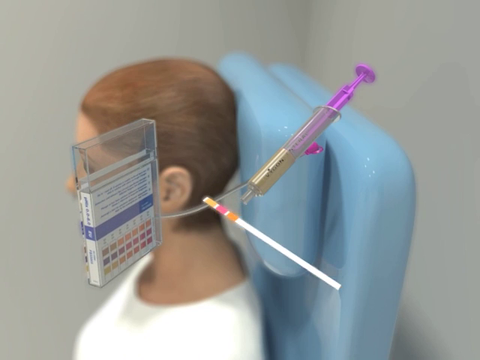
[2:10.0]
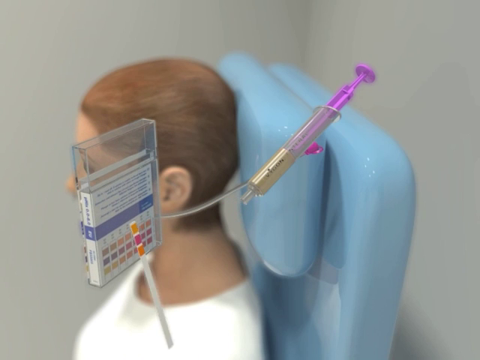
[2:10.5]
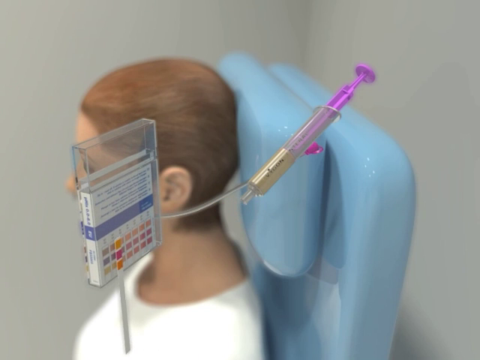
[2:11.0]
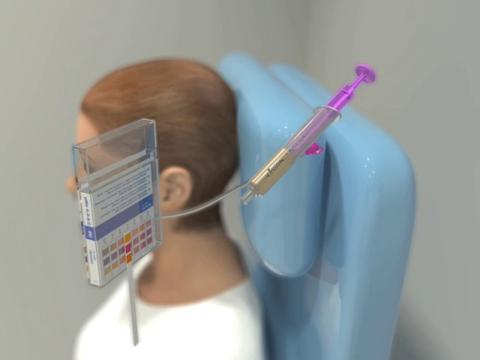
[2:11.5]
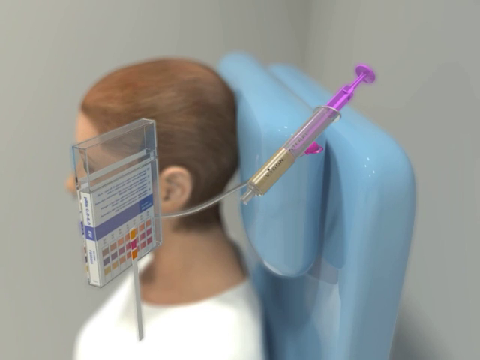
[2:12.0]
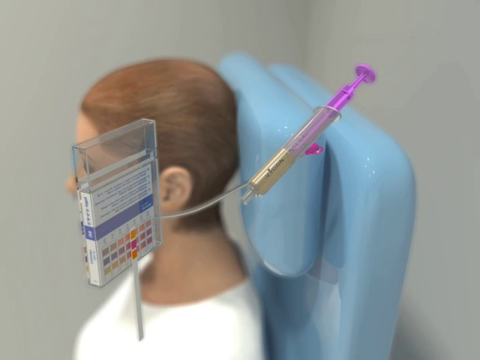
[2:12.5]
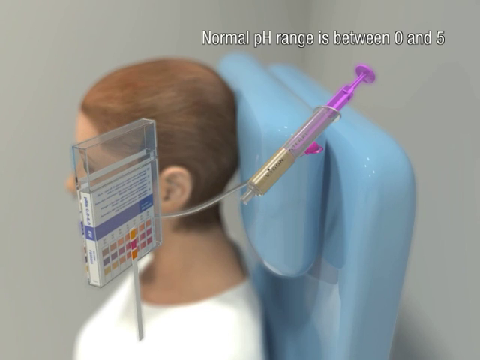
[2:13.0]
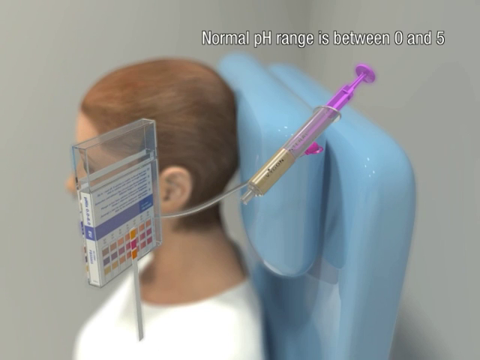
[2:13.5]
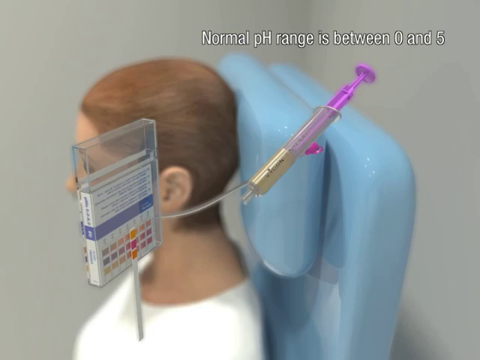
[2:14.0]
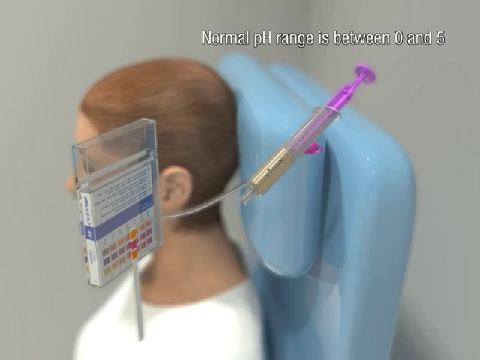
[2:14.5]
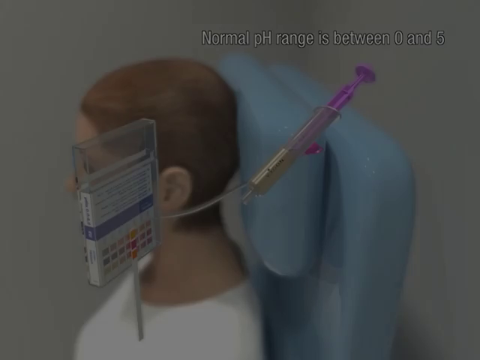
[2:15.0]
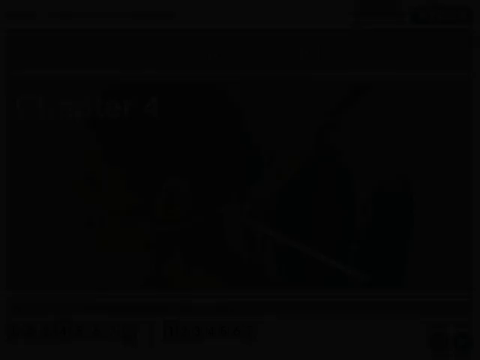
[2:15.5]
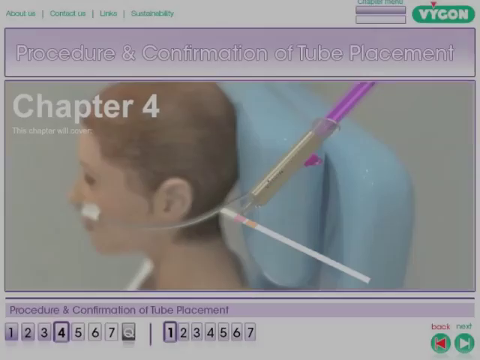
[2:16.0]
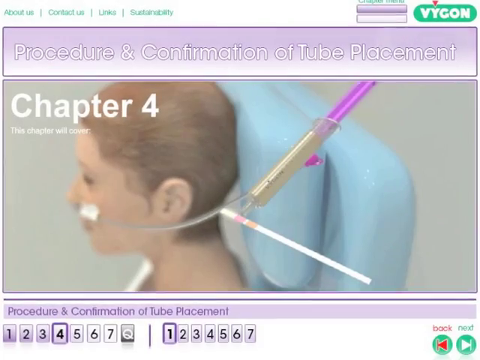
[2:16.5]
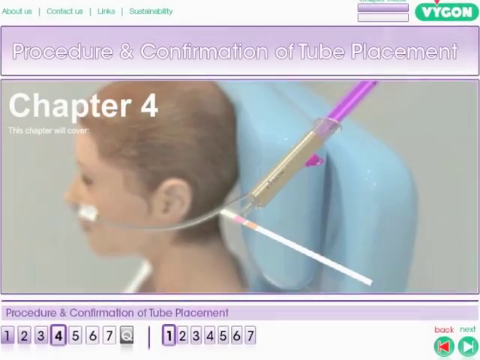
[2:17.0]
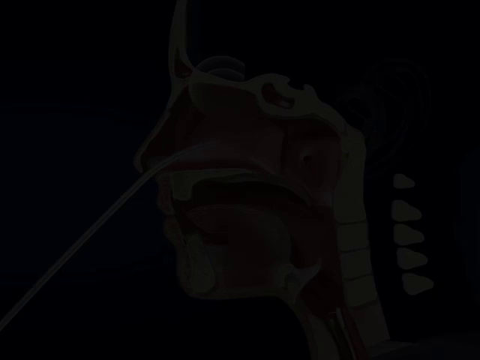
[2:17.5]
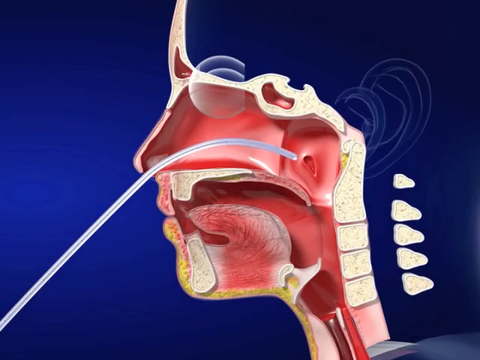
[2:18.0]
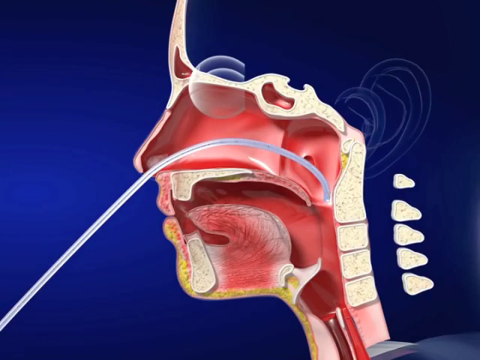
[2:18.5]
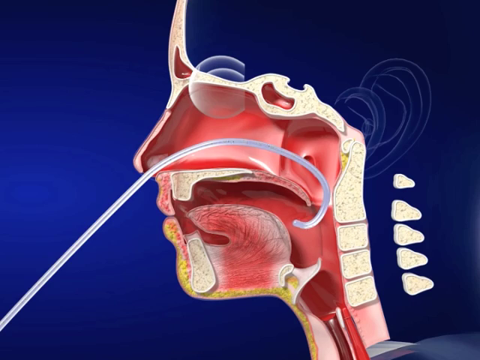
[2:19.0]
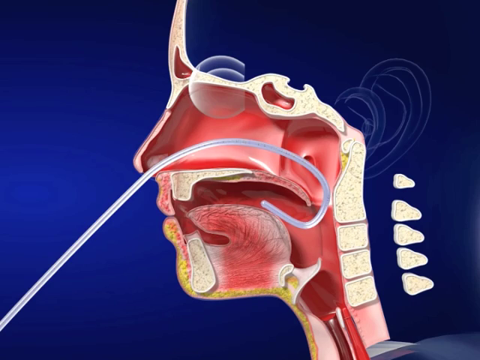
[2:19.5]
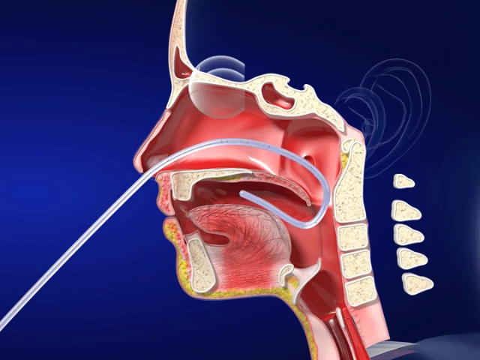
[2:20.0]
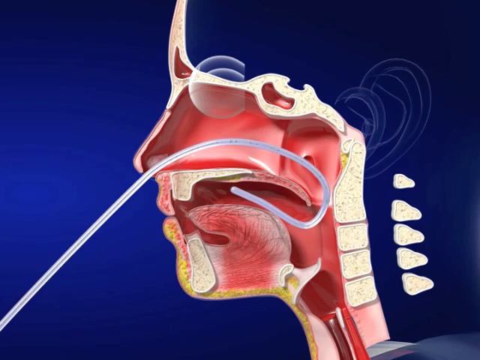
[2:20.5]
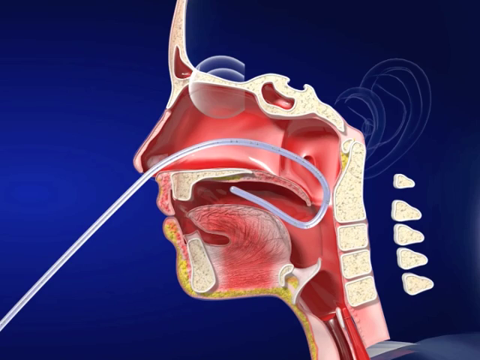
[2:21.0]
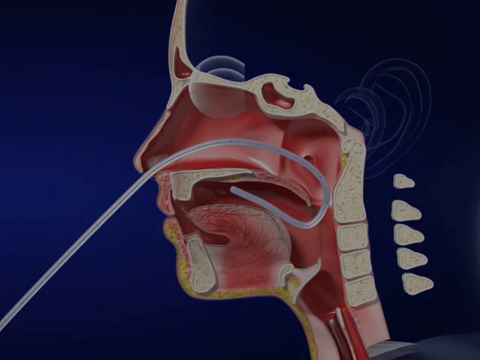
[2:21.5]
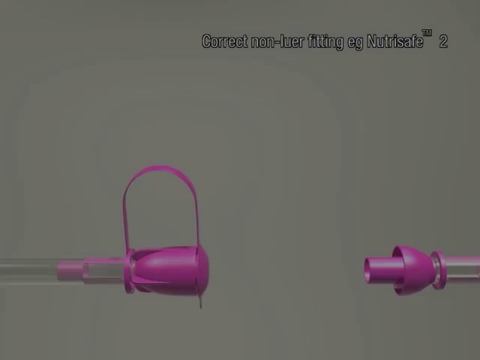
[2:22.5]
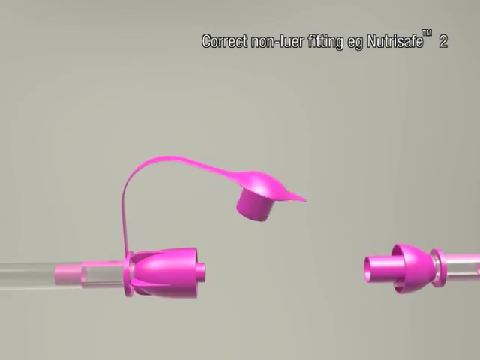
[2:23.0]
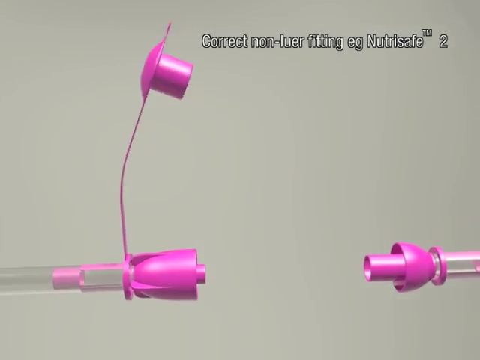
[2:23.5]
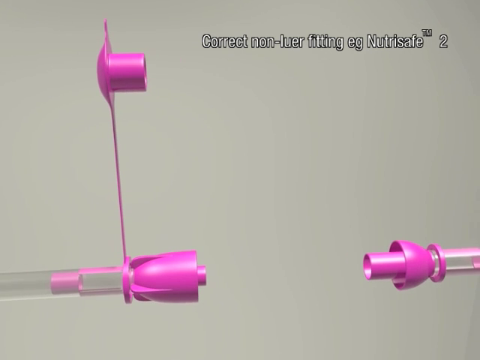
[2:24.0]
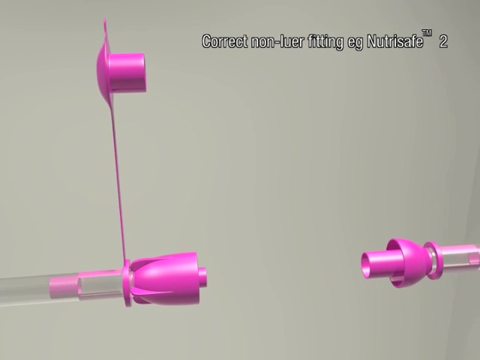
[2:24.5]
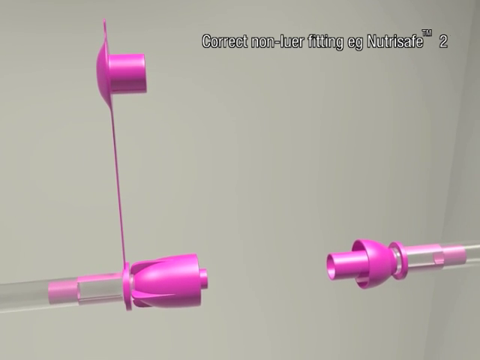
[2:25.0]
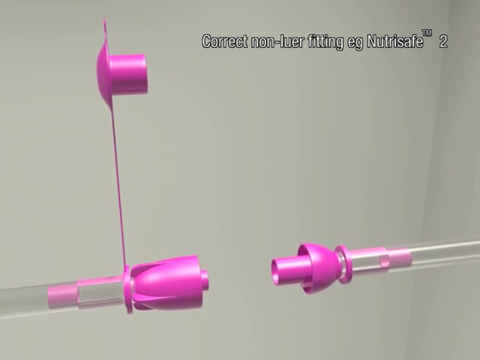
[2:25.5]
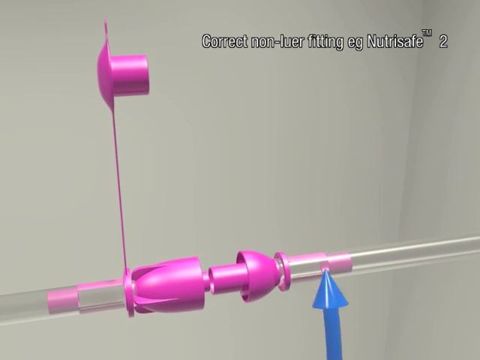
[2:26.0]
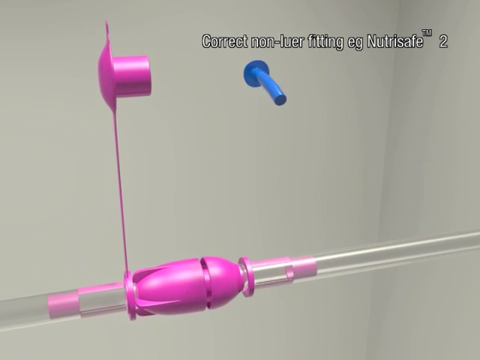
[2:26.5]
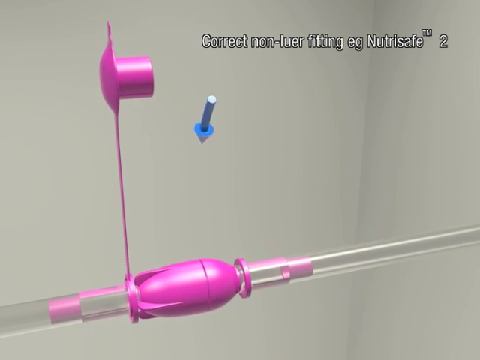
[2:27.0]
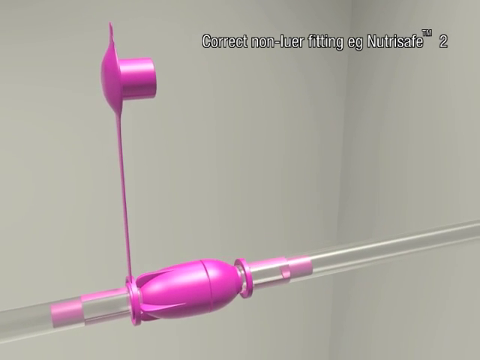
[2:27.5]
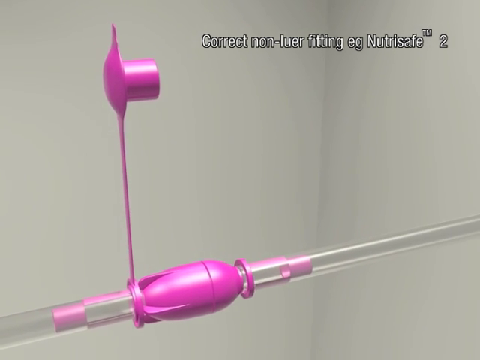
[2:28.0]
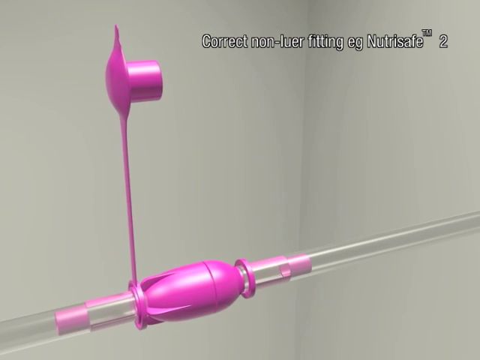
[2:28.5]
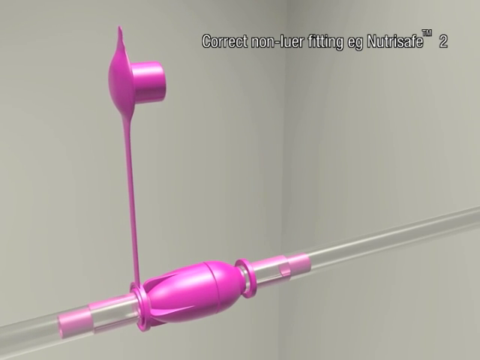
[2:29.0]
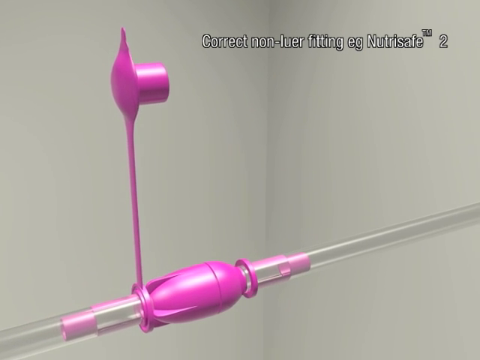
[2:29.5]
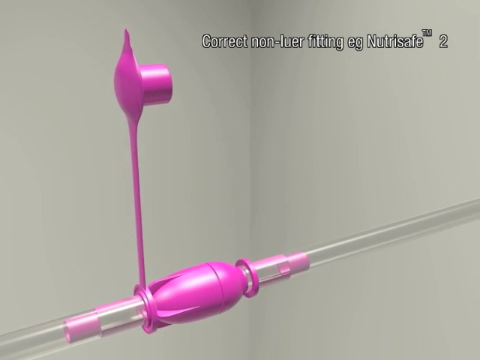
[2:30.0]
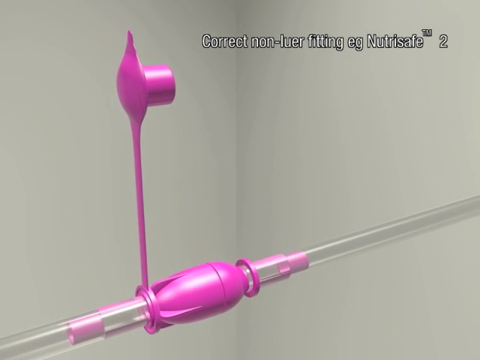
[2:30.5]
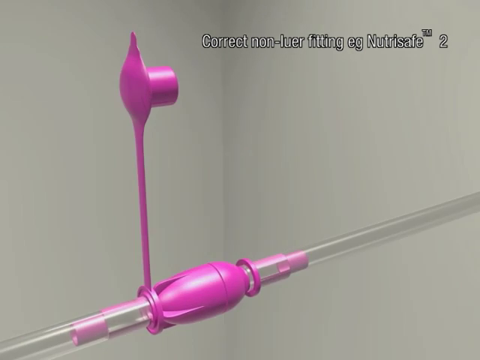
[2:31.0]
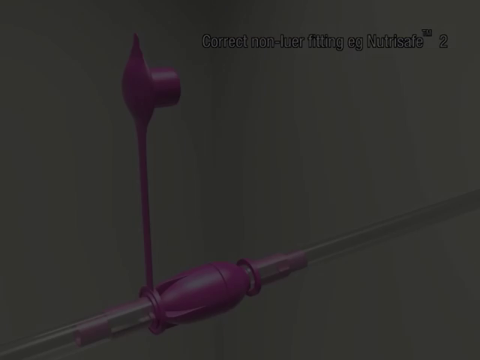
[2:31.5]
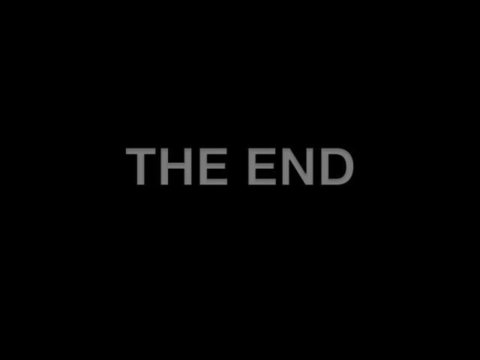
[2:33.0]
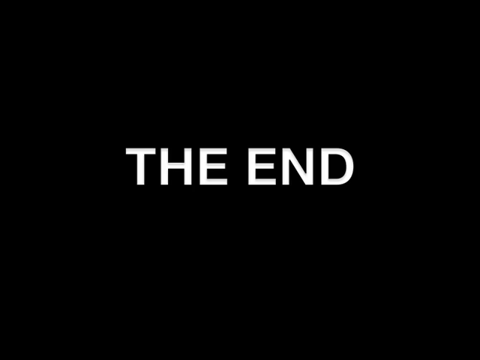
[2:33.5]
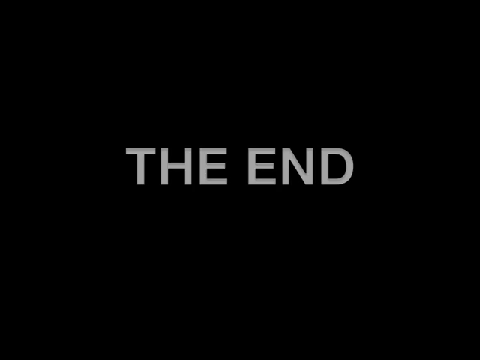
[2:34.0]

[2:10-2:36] Against a gray background is a patient simulation: from the left, the patient lies on a blue rubbery bed. In the foreground is a rectangular clear box containing paper or cardboard. A grayish-clear Vygon medical tube is attached to a Vygon syringe with a purple handle and brown liquid inside. A white, yellow, pink, and orange strip is at the bottom center of the screen; it is moved to the left to align with matching colors on the paper inside the clear box, and moved to the right on the box until the colors match. White text appears at the top right: "Normal pH range is between 0 and 5." The screen goes black, and another image of the training program appears with the text "Procedure and Confirmation of Tube Placement" and "Chapter 4" at the top, along with the patient viewed from the left with the tube taped to their face, the white strip, and the syringe. The scene goes black, and the blue background with the patient's silhouette returns, again from the left, with a cross-section of the nose and facial anatomy as the tube enters the nose, goes down around the soft palate, and back out into the mouth. The scene goes black again, and the next scene has a grayish-tan background with white text at the top right: "correct non-lure fitting, e.g. NutriSafe TM2". The tube comes into the picture from the left; it has a pink cap that looks like an Expo marker cap.